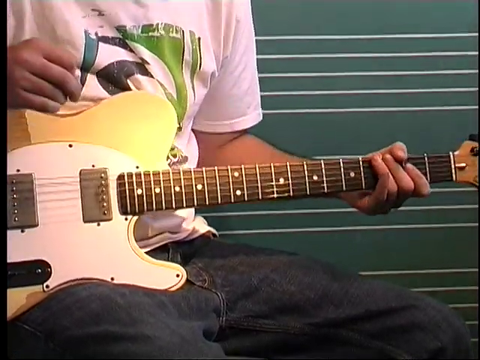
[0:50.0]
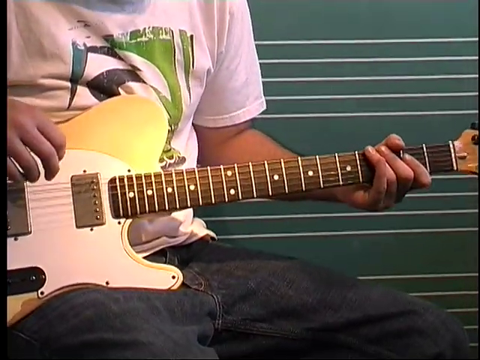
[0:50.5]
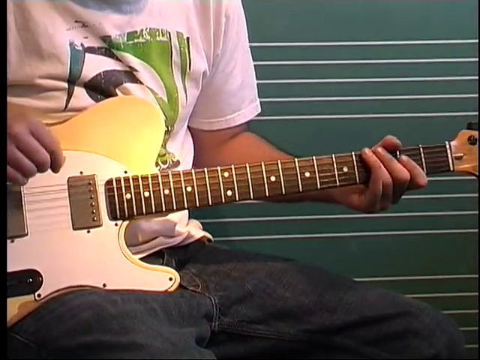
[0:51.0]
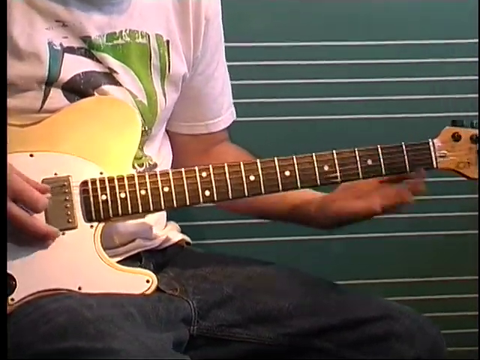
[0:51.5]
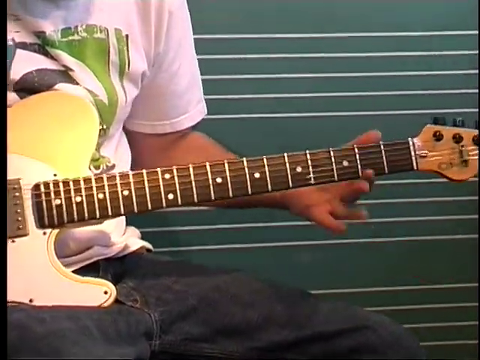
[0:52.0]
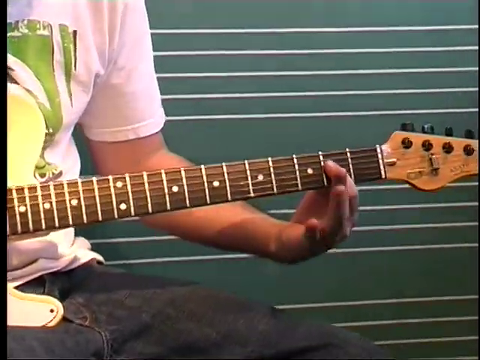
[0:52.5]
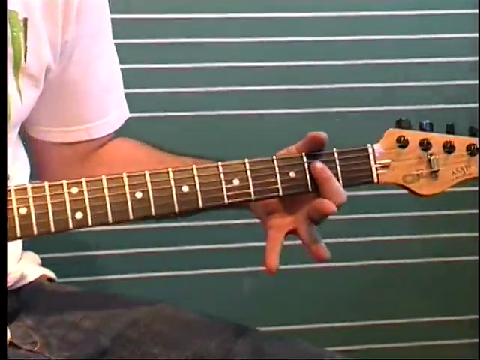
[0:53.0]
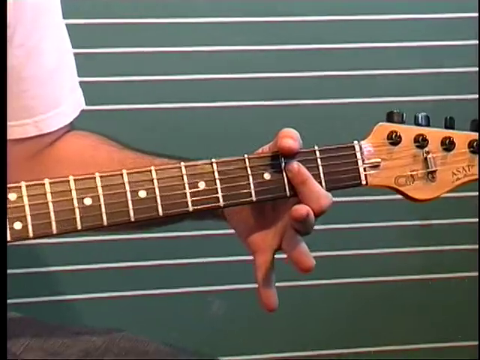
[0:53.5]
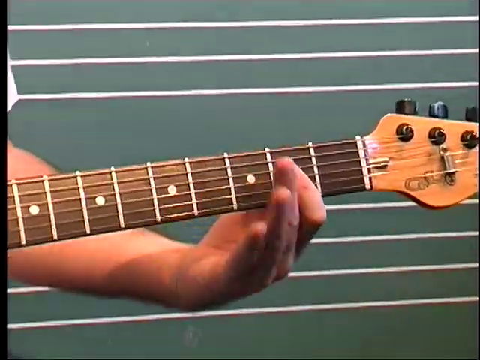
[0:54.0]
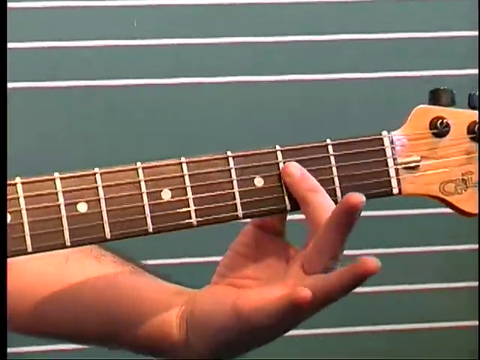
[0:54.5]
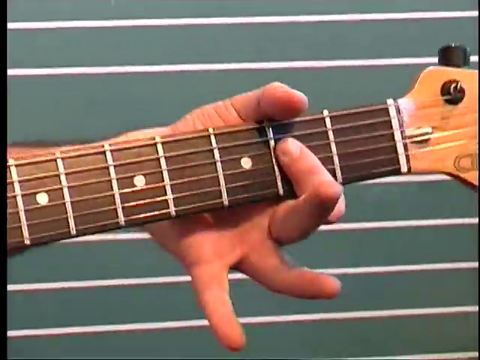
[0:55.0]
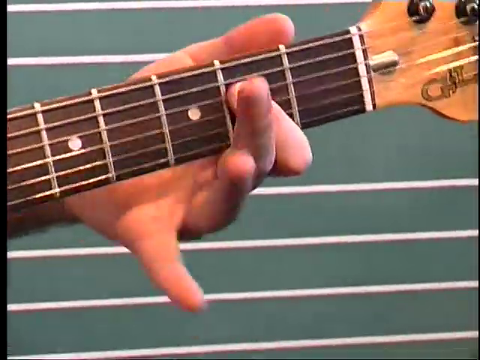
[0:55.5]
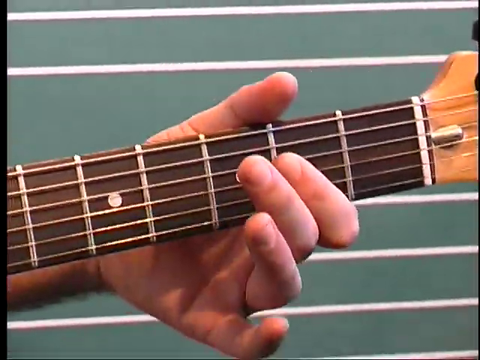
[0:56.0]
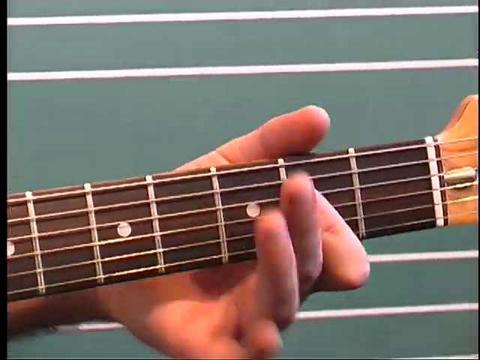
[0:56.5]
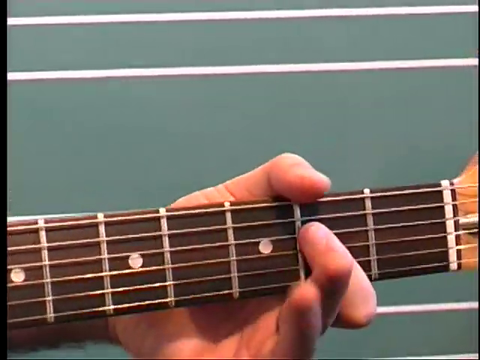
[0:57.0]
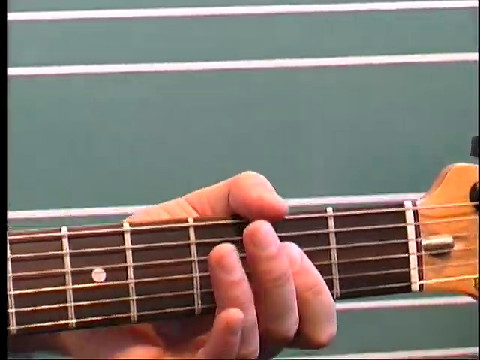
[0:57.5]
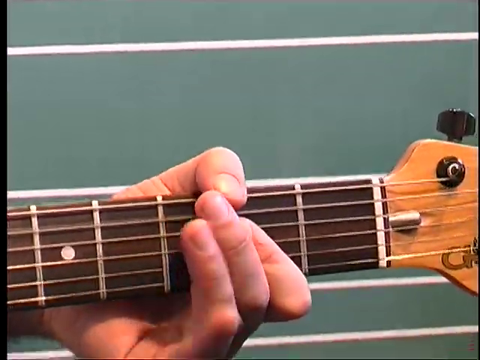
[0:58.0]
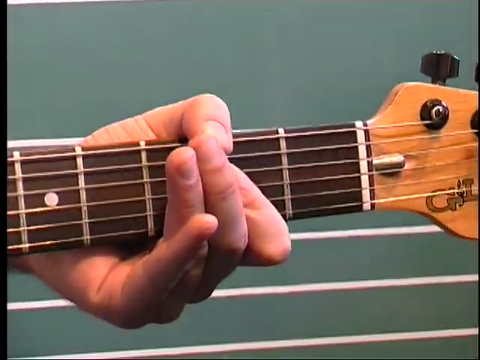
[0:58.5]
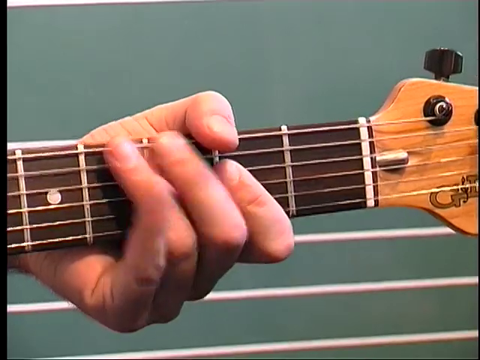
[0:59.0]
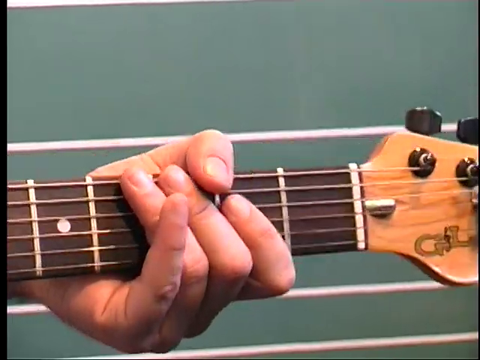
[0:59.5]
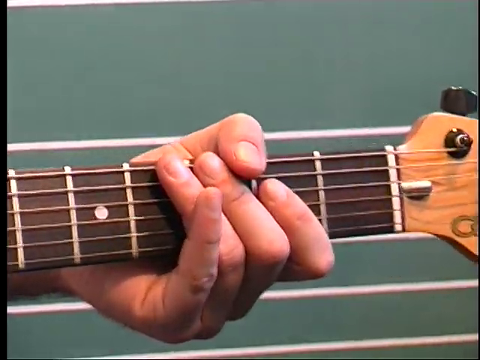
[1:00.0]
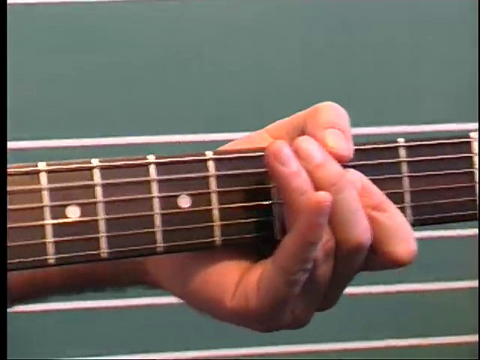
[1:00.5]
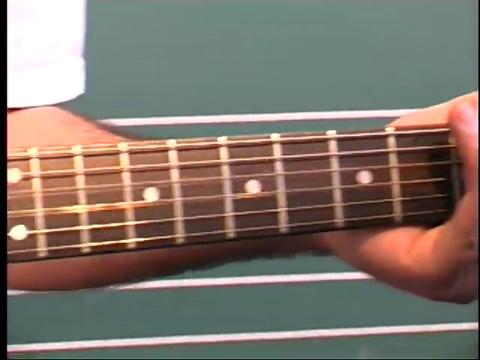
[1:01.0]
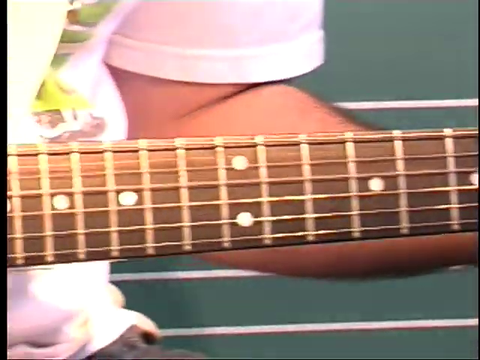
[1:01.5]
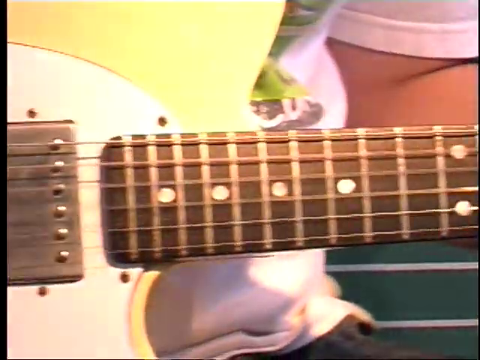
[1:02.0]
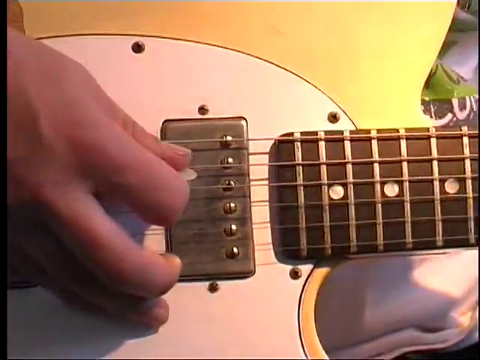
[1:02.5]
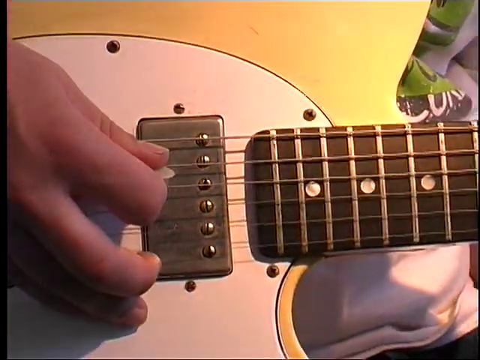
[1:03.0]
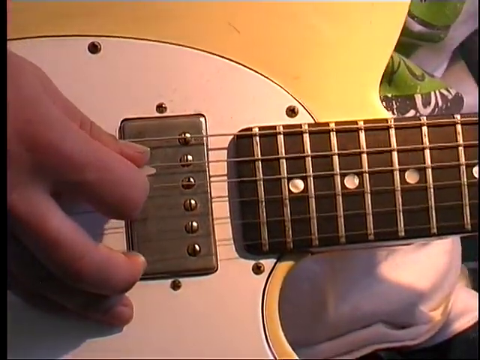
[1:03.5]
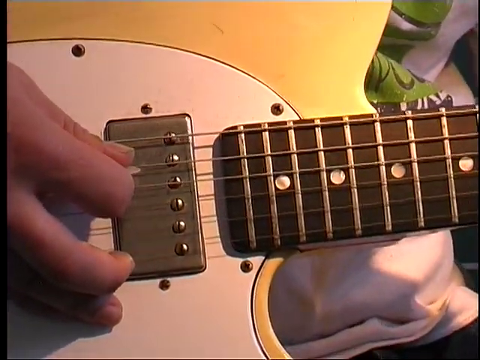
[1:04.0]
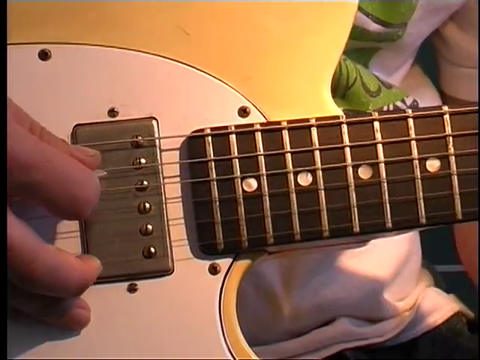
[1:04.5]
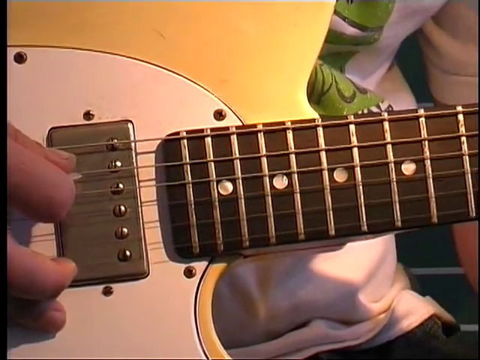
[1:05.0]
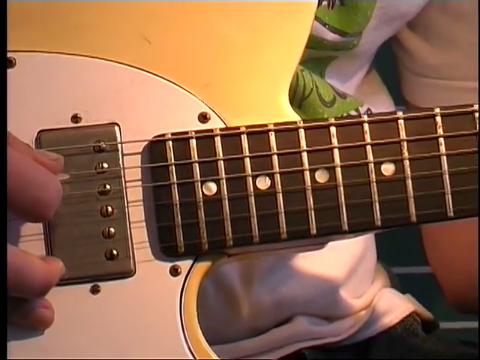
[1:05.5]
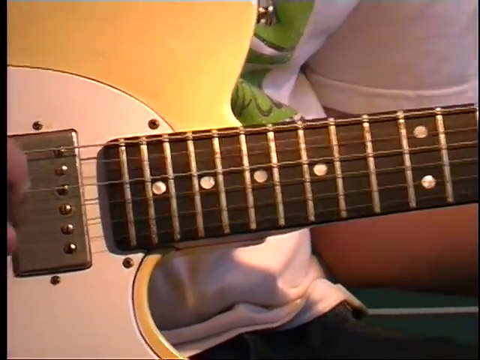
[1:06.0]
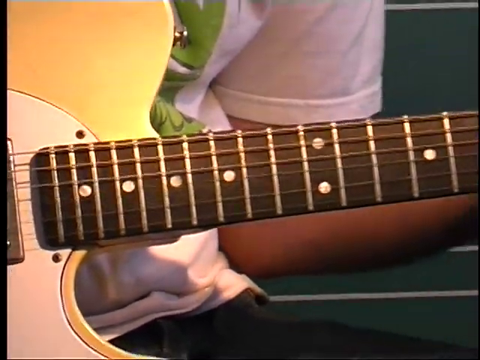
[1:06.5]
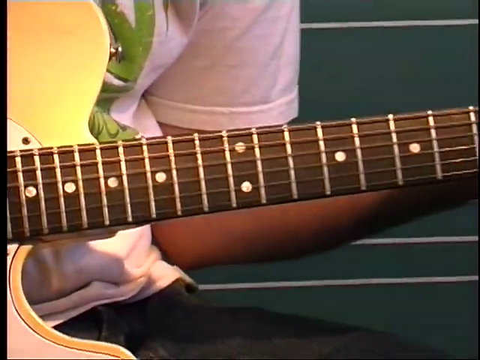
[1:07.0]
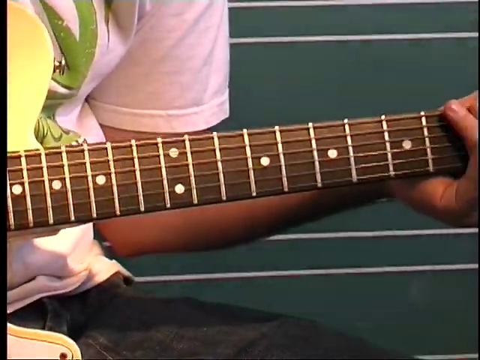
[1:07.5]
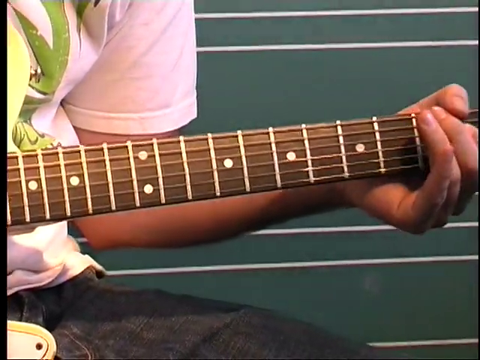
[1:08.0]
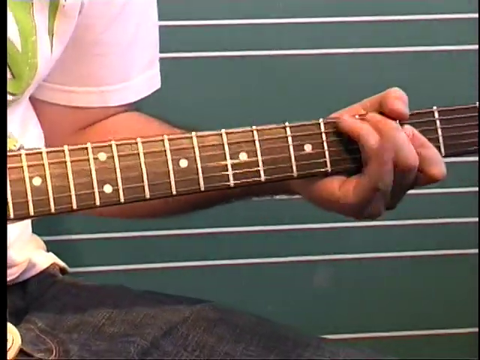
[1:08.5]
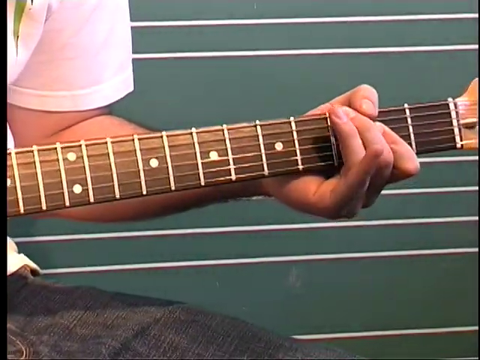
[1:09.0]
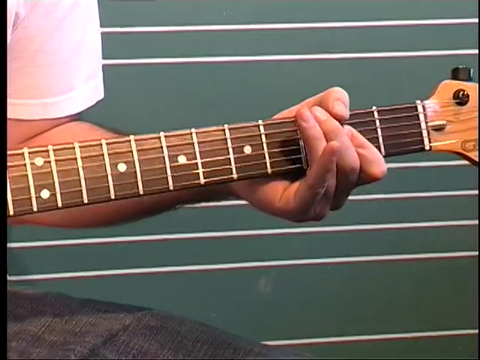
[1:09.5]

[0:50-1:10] A close-up shows a man holding a yellow and white electric guitar. He wears a short-sleeved white shirt with a graphic on the front and dark blue jeans; the camera is zoomed in so that only his chest and lap, where the guitar sits, are visible. He stops playing and moves his right hand away from the body of the guitar, then lifts his left hand off the neck, moves it down, and puts it back on the guitar, his index finger holding down the third string from the top. The rest of his fingers curl under the guitar and he seems to adjust his grip slightly. The camera zooms in closer: he holds the third string down with his index finger and the first string from the top with his thumb, while his other fingers hover over the neck in a tapping motion. The camera pans left to show his right hand over the body of the guitar, holding a small white pick, and he begins strumming up and down. The camera then pans right again, showing him pressing different strings with his fingers.